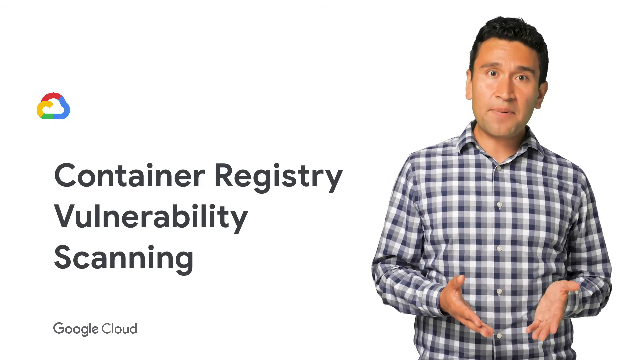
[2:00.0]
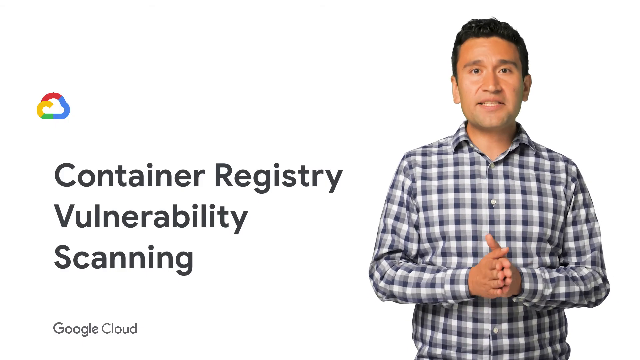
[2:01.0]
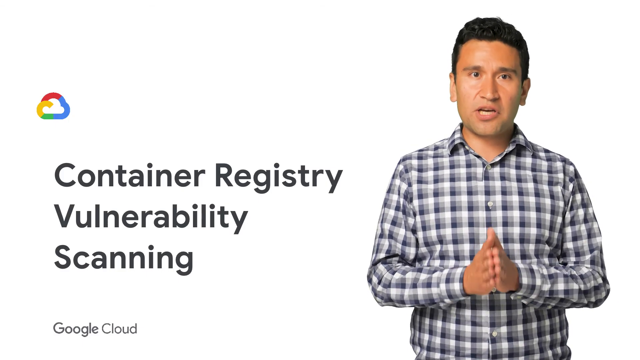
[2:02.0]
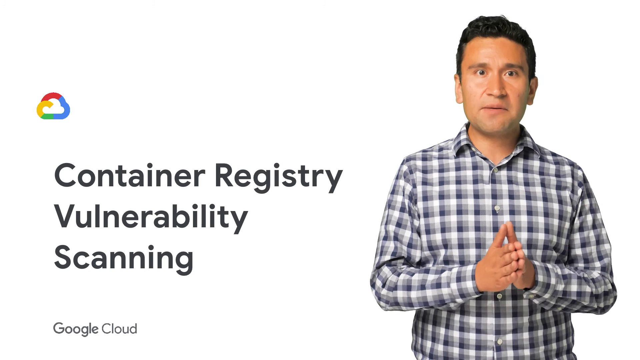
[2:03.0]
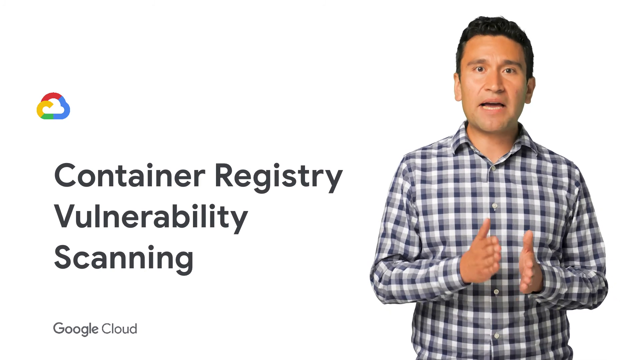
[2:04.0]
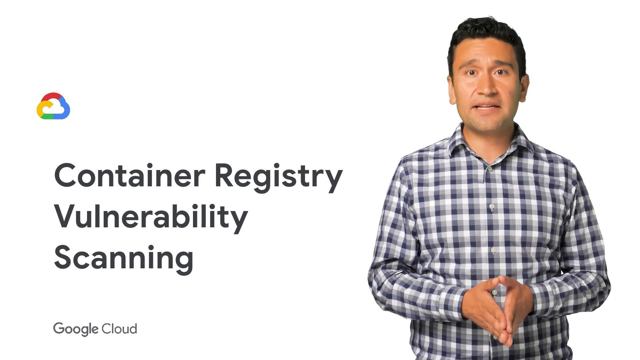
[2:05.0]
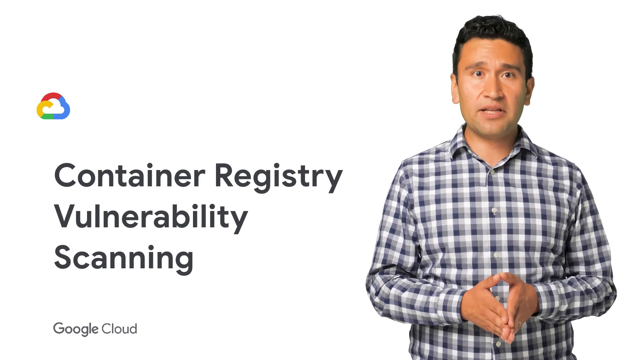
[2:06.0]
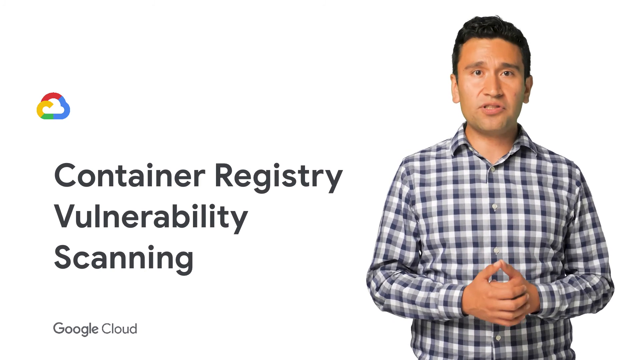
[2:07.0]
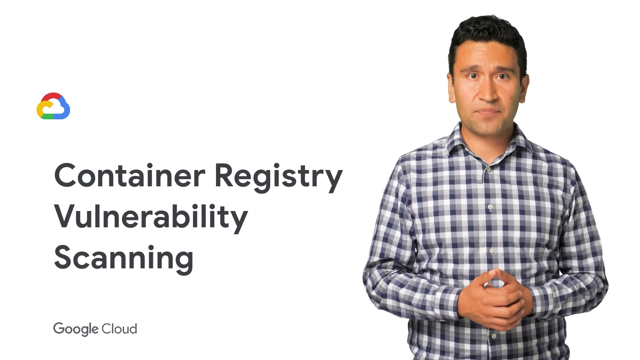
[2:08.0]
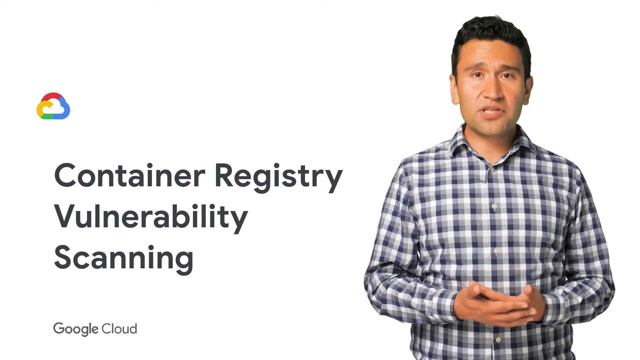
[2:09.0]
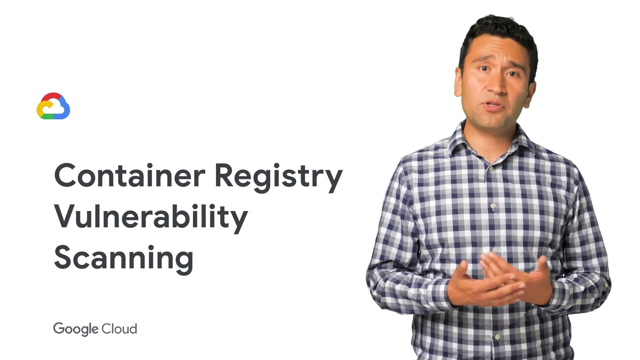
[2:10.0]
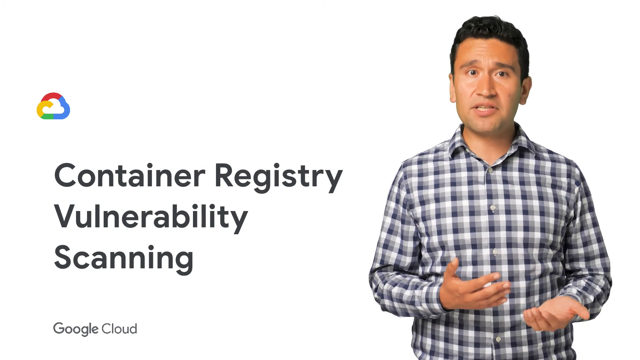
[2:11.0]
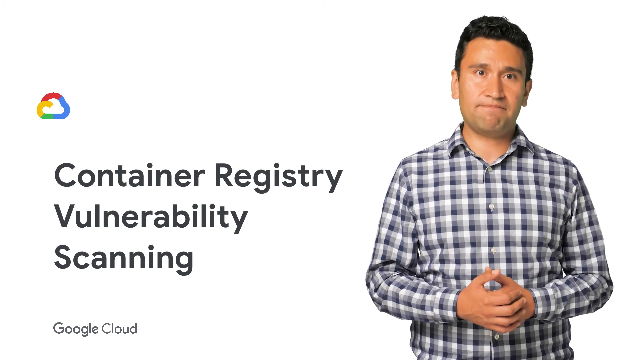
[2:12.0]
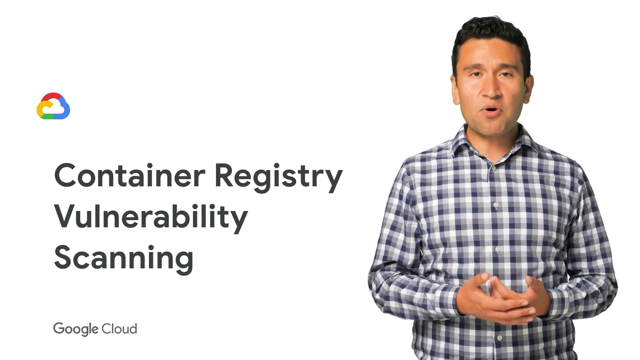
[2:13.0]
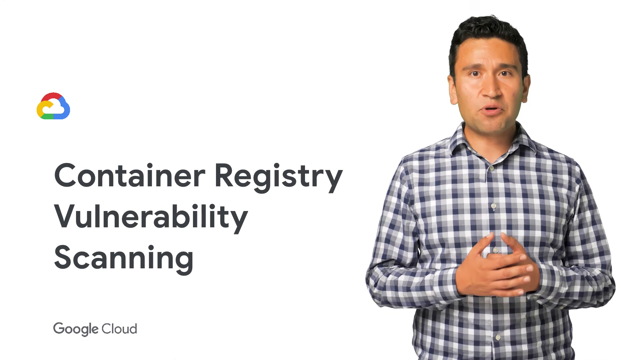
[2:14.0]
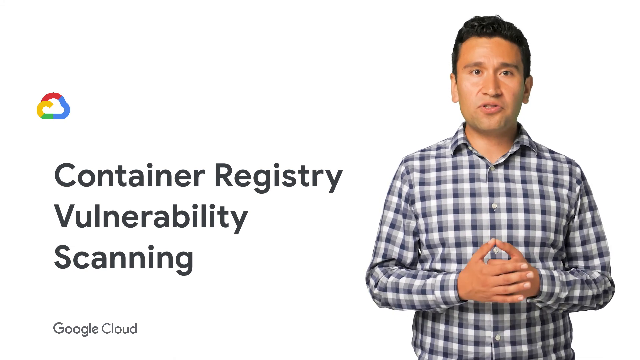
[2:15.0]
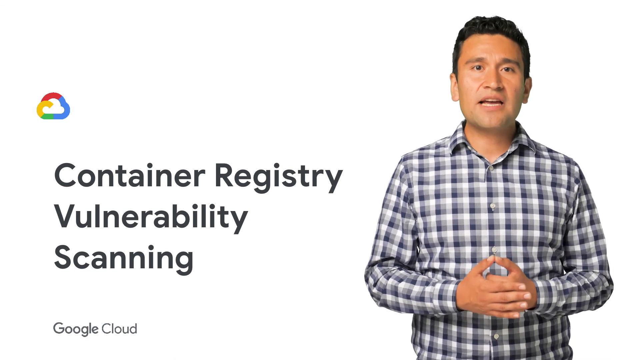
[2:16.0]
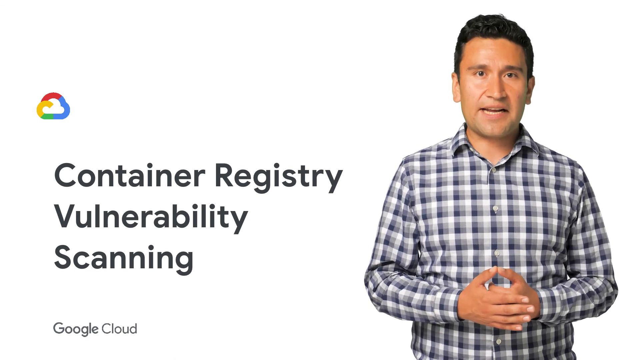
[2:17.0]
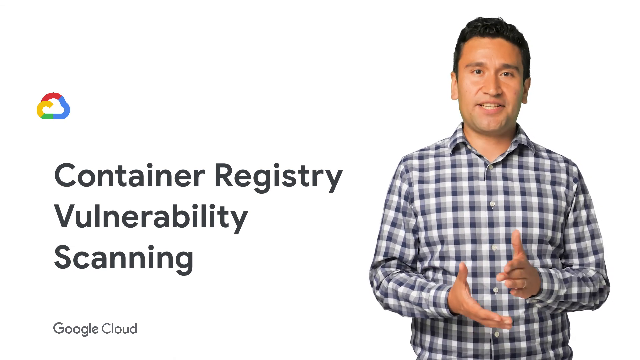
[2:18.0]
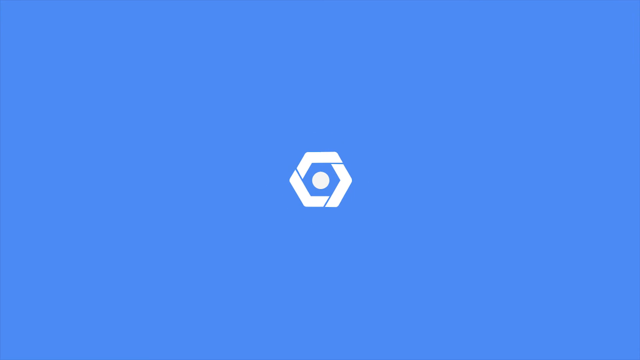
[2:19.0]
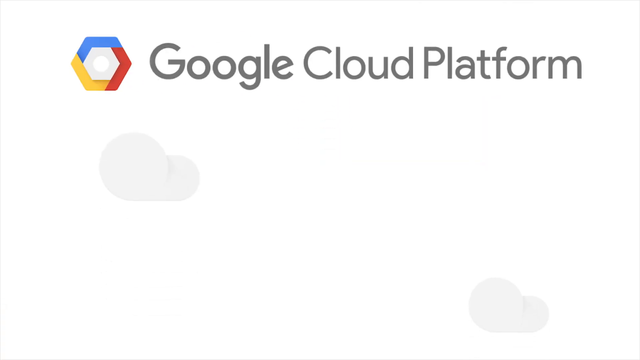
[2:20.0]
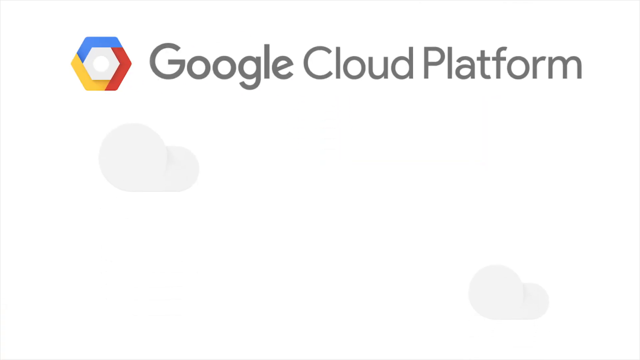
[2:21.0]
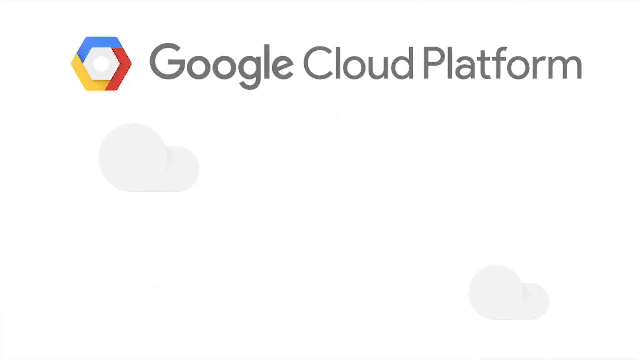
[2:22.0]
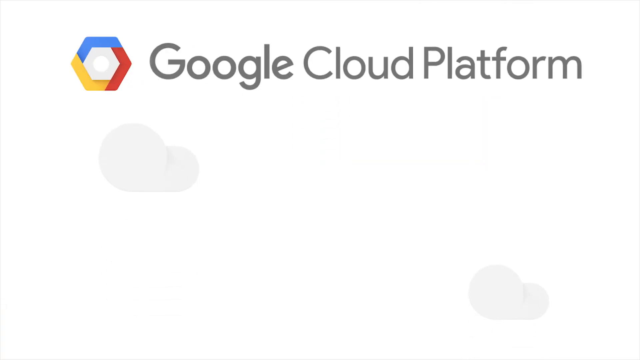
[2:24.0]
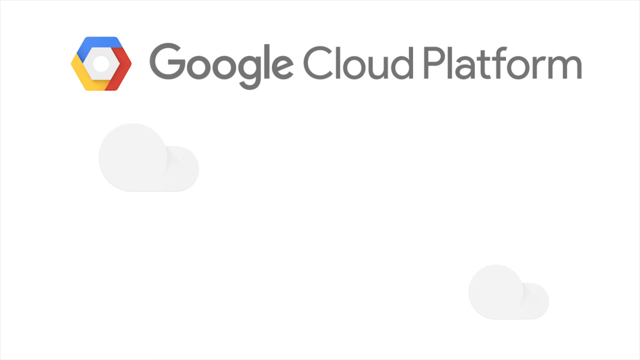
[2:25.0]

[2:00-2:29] On a white background, a Google Cloud logo is in the upper mid-left area: a cloud shape with a white center, outlined in red, blue, green, and yellow. Underneath is bold, large, black sans-serif text reading "Container Registry, Vulnerability, Scanning." On the right side is a man seen from the waist up, wearing a long-sleeved plaid button-up shirt in tones of black, gray, and white. He has short brown hair, looks at the camera with a neutral expression, and speaks, using his hands, folding them in front and moving them up and down. He looks like he may be wearing a gold band on his left hand. The view then goes to a blue screen that transitions to a white screen showing a Google Cloud Platform logo: a hexagon in the same sort of rainbow colors of red, blue, green, and yellow, with the text in dark gray.